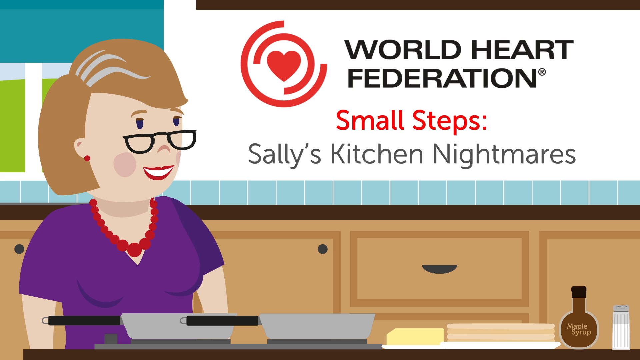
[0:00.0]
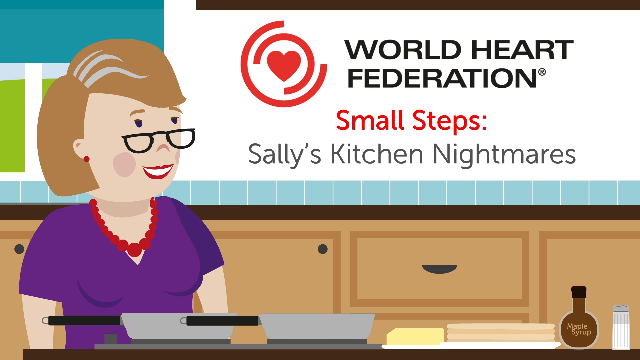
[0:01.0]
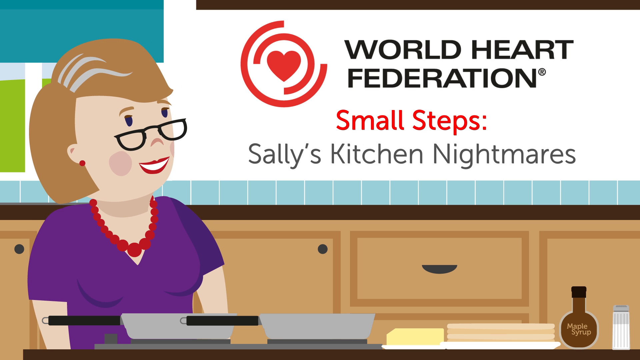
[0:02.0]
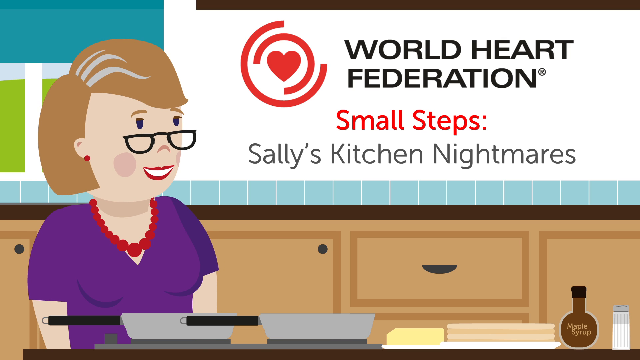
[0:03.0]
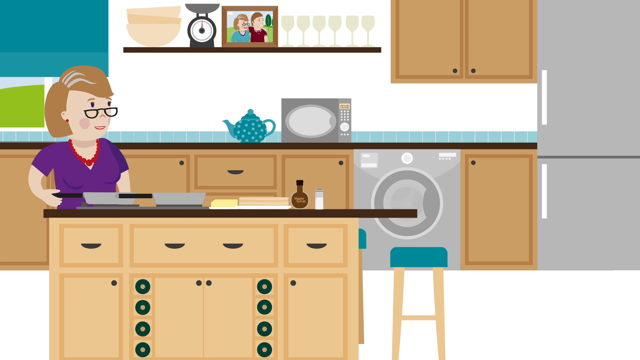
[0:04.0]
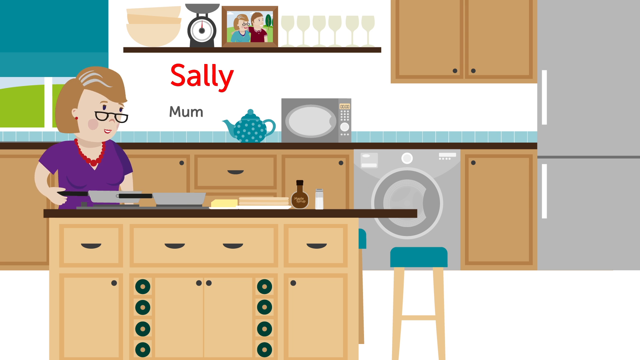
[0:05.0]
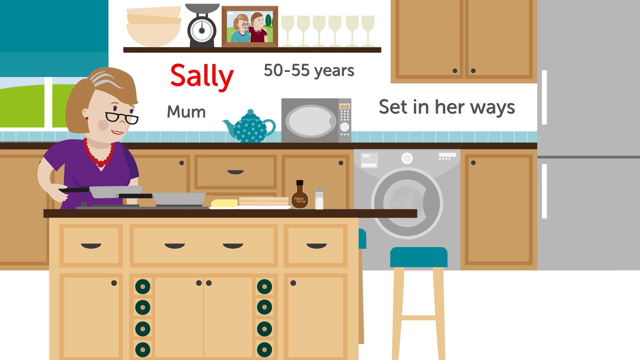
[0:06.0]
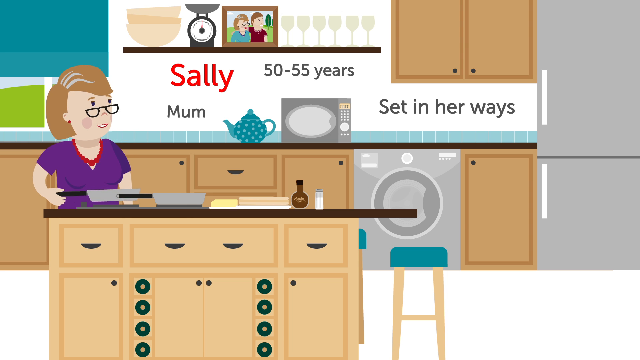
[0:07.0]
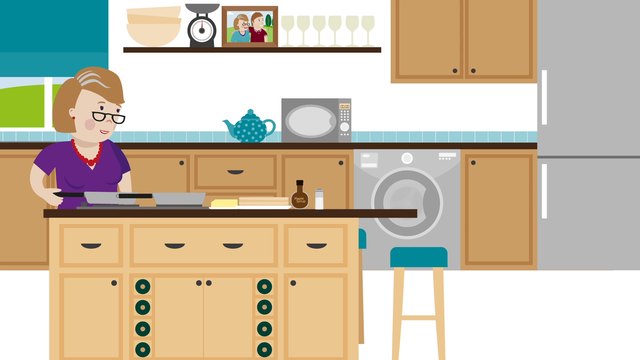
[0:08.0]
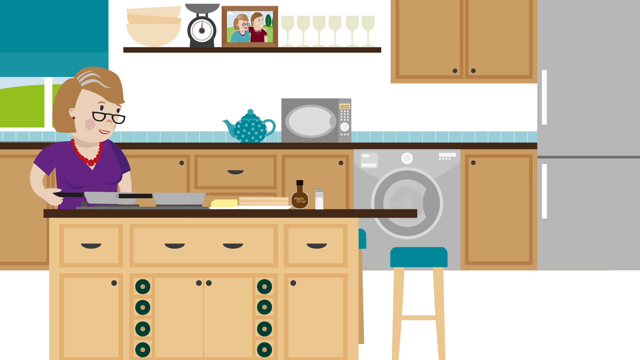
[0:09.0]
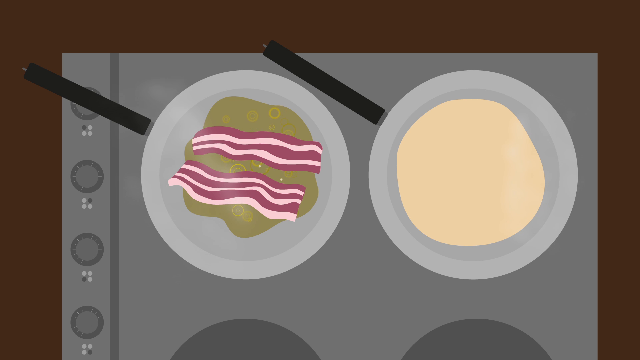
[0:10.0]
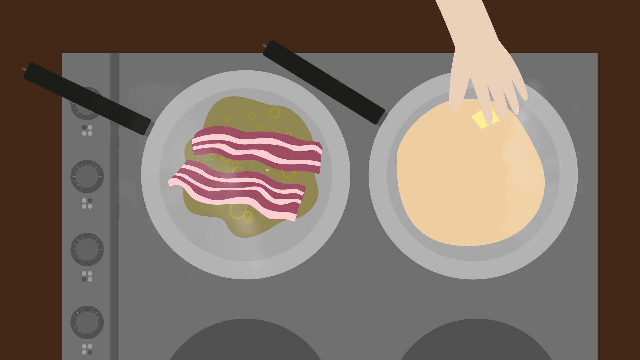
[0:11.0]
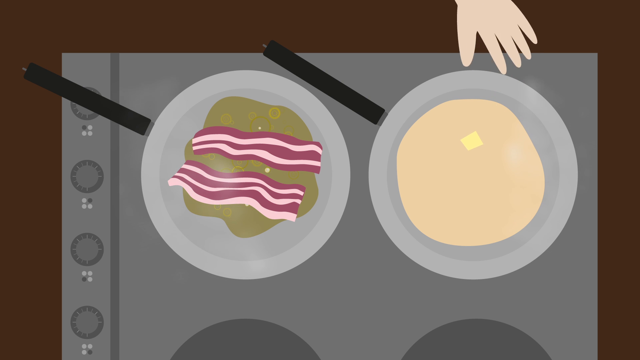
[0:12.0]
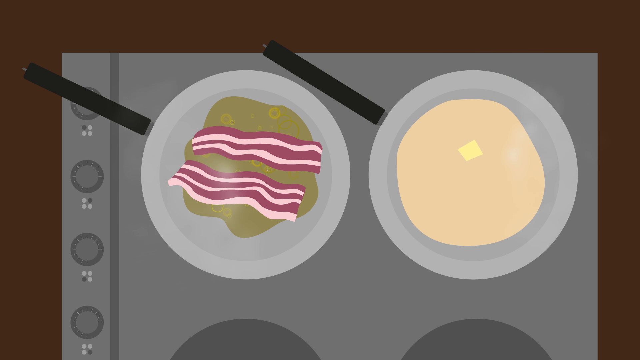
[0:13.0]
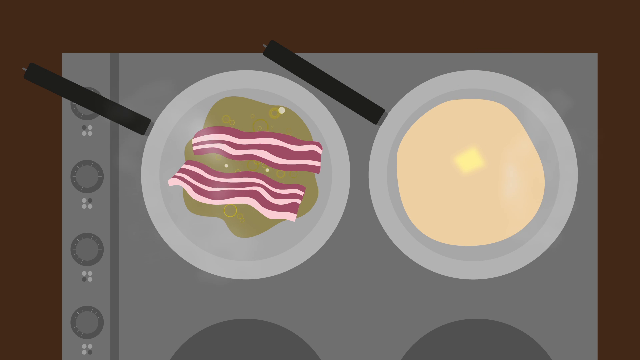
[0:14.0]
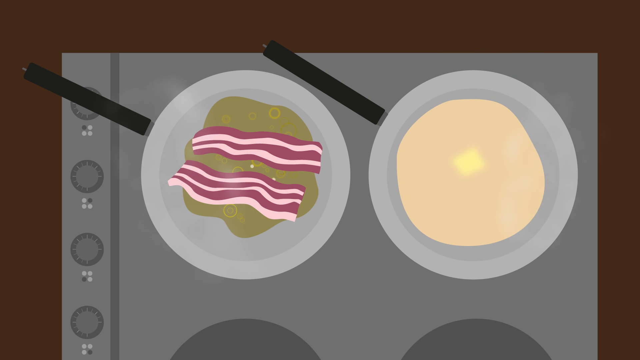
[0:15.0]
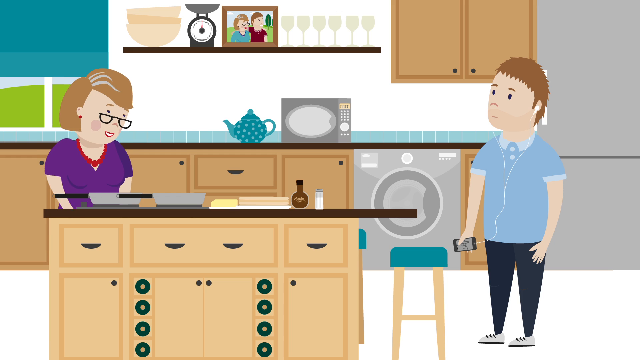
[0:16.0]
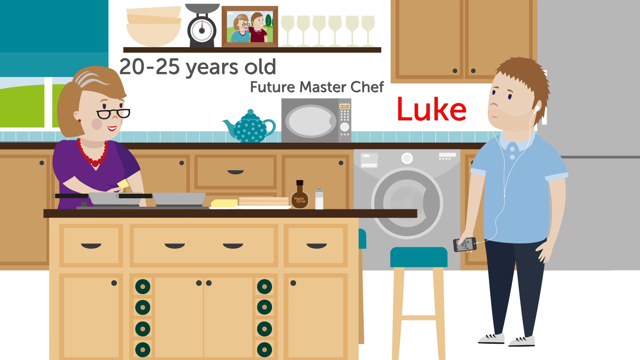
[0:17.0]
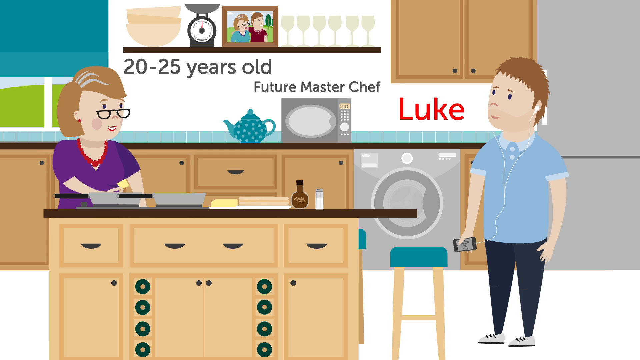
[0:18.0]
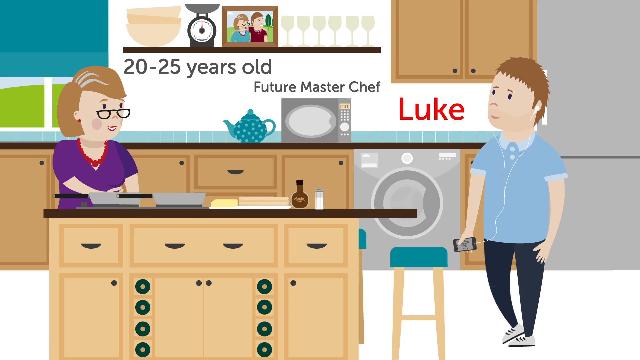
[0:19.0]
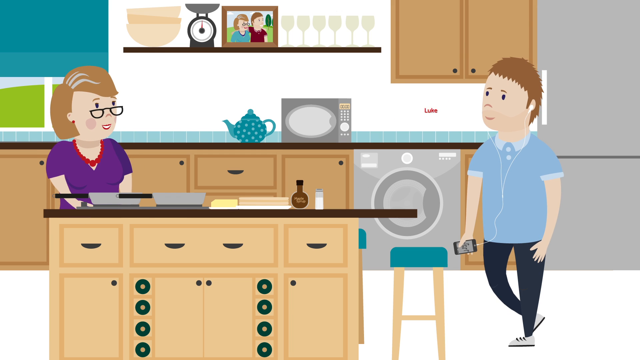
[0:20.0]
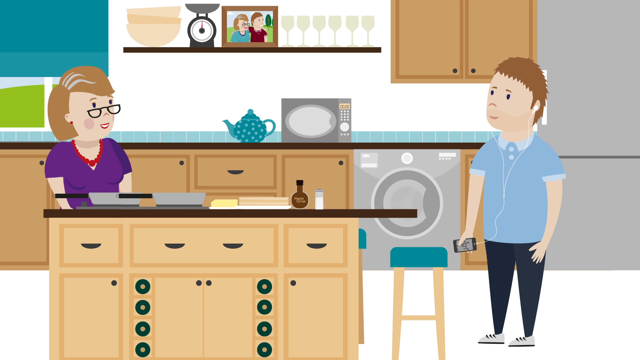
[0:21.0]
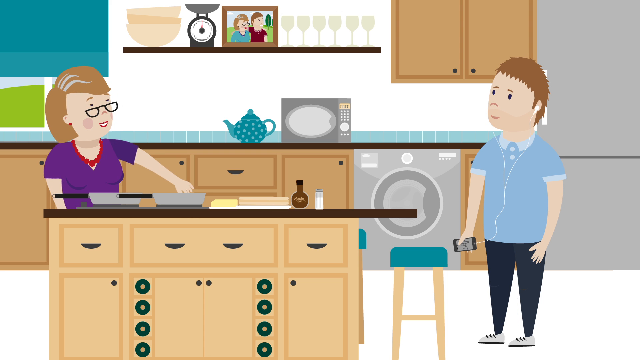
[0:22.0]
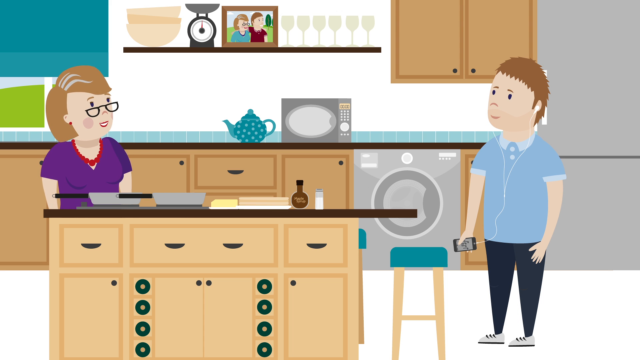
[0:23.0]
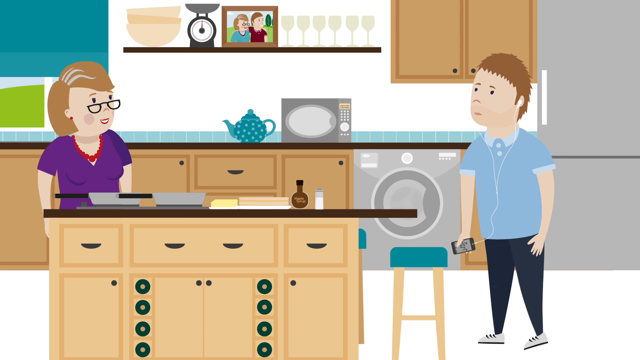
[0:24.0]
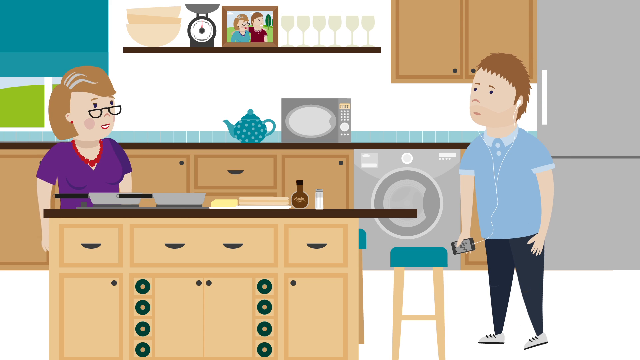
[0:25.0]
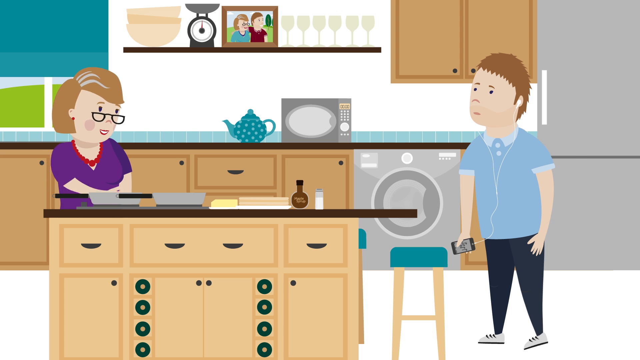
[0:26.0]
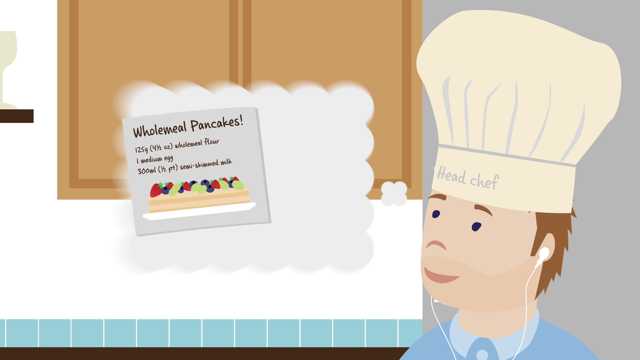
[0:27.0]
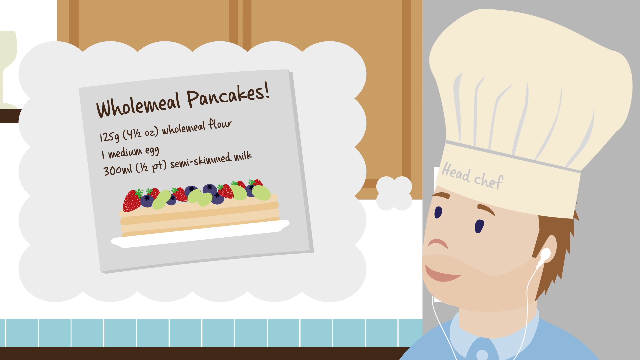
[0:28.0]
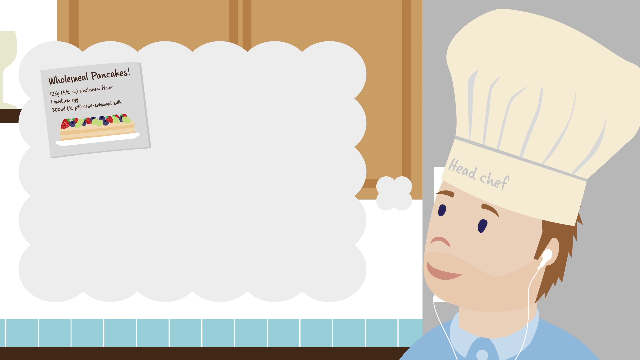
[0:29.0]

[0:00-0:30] The video opens with black and red lettering and a symbol. "World Heart Federation" appears in black lettering against a white background, "Small steps" in red lettering, and "Sally's Kitchen Nightmares" in light black lettering. In a kitchen, the walls are blue tile and the cabinet doors are brown with a brown counter on top. A lady with black-rimmed sunglasses, lipstick, brown hair, a purple dress and a red bracelet looks like she is possibly a cooking teacher. An outer view of the kitchen area shows a picture of the lady and a picture on the shelf with a scale and some cups. A person in a purple shirt, who could be her son, one of her children, is hugging her. The lady is standing next to a kitchen island, which is like a mini table, and there are chairs with blue seats. Text reads "Sally, a mum, 50 to 55 years set in her ways." A close-up shows bacon being cooked on a stove along with what may be pancakes; the stove looks gray with a brown border. Somebody named Luke then pops up, wearing a blue shirt, black pants and gray sneakers, with brown hair.